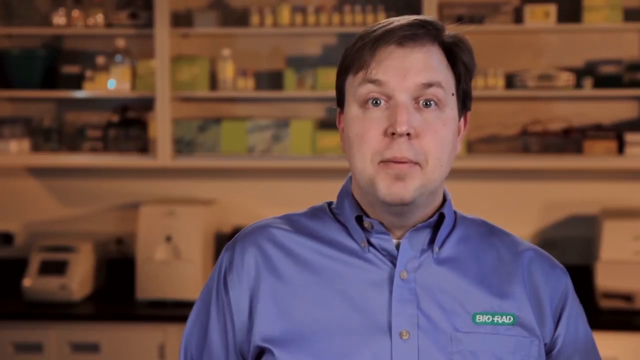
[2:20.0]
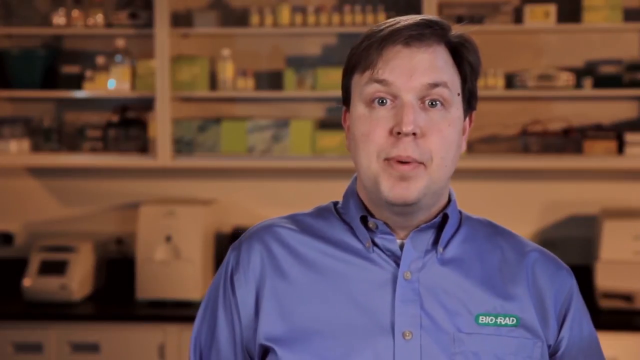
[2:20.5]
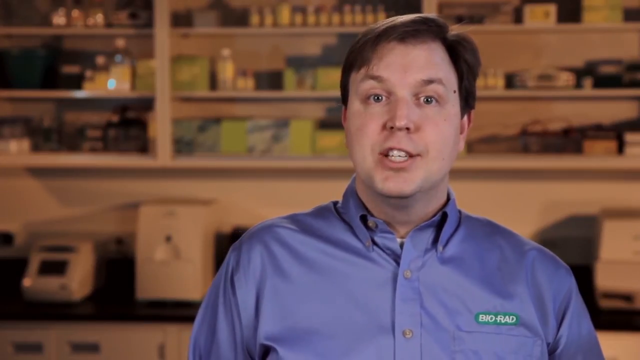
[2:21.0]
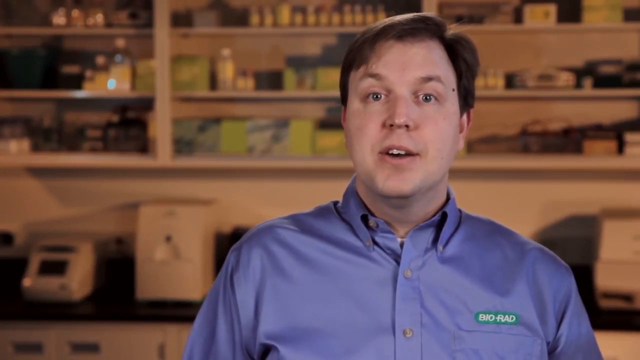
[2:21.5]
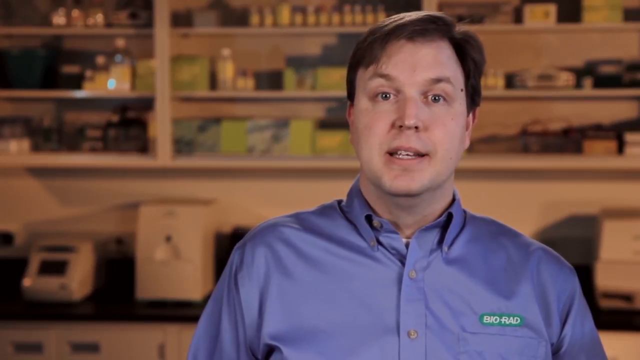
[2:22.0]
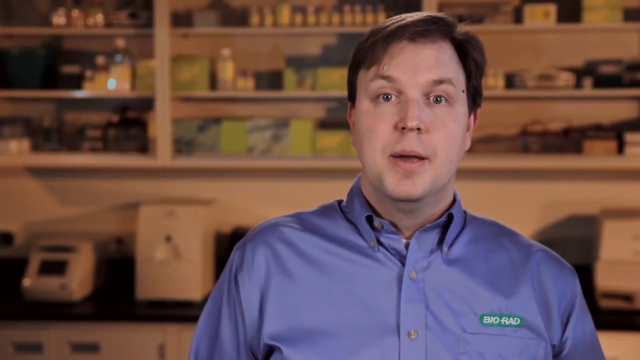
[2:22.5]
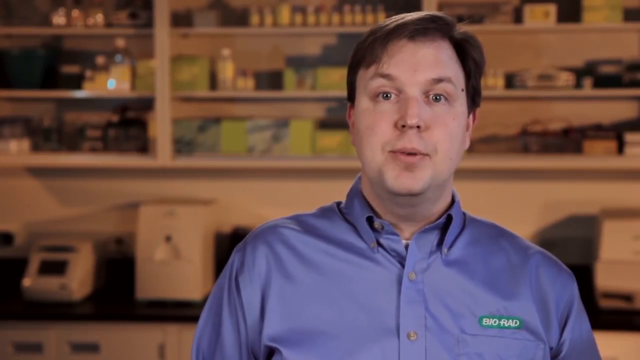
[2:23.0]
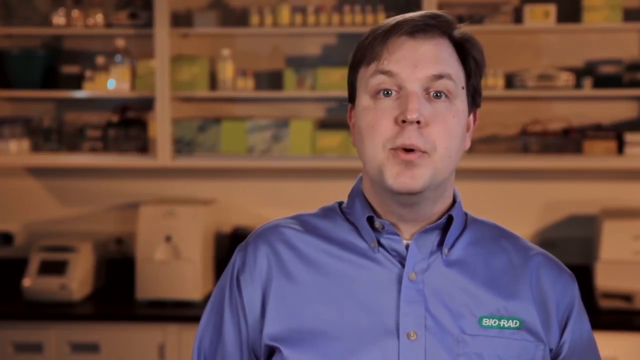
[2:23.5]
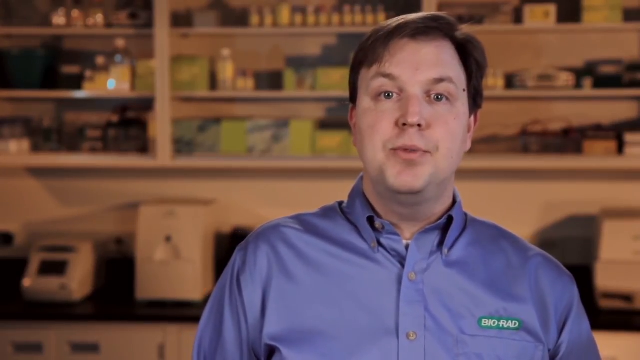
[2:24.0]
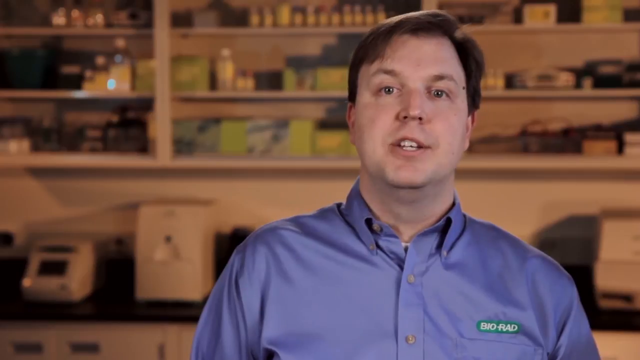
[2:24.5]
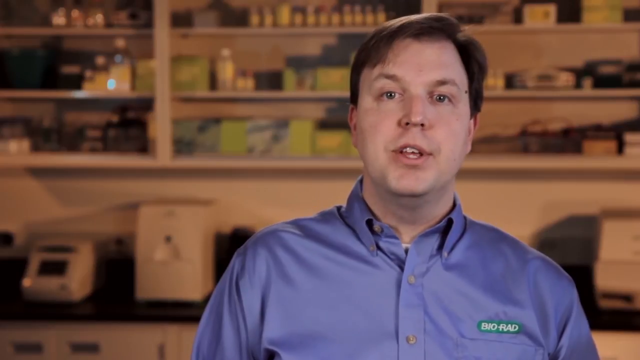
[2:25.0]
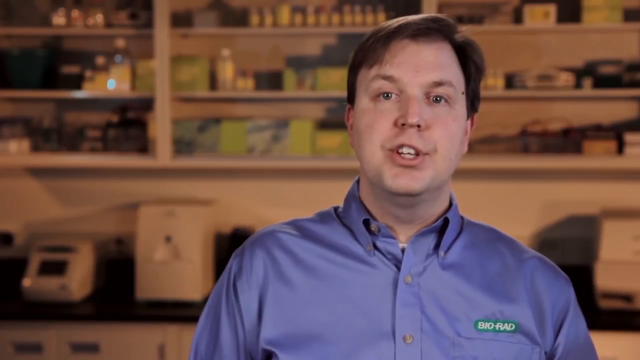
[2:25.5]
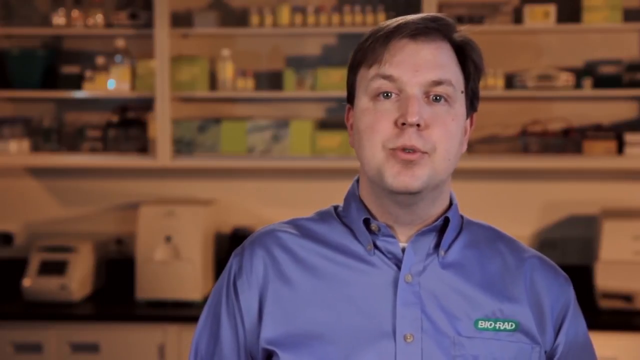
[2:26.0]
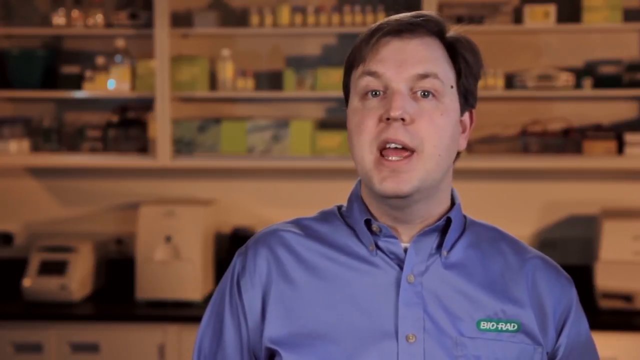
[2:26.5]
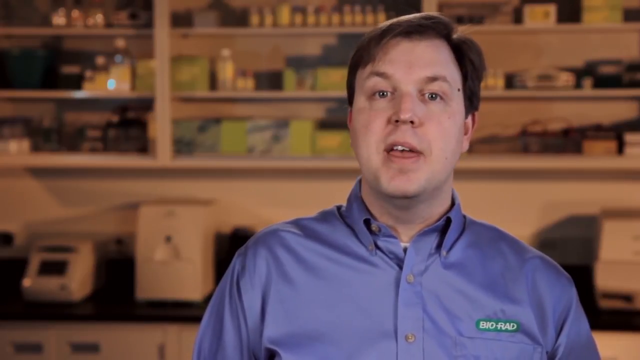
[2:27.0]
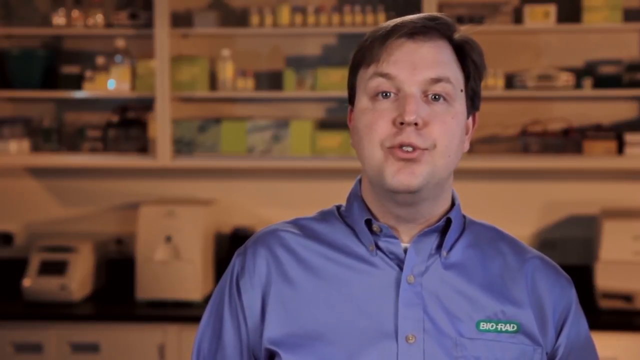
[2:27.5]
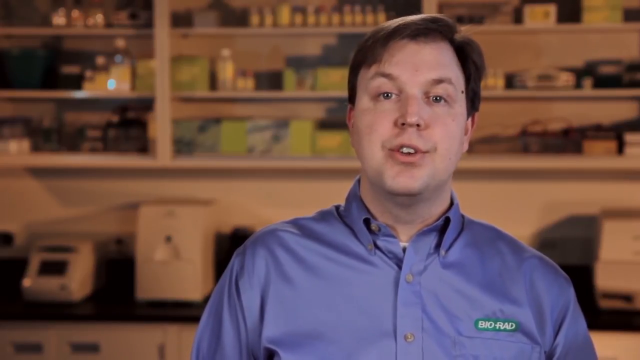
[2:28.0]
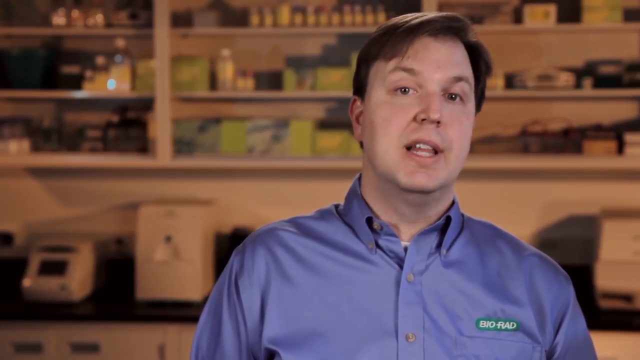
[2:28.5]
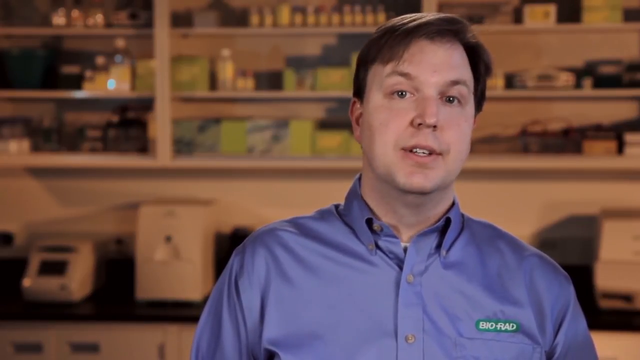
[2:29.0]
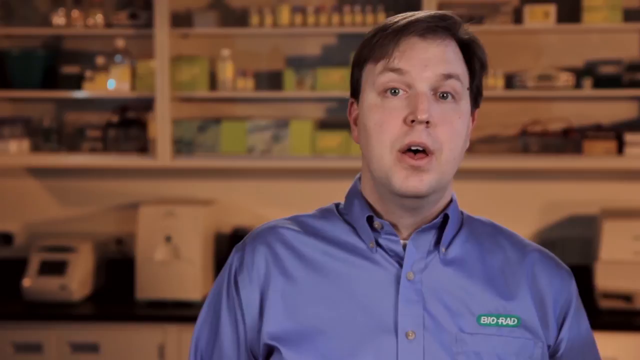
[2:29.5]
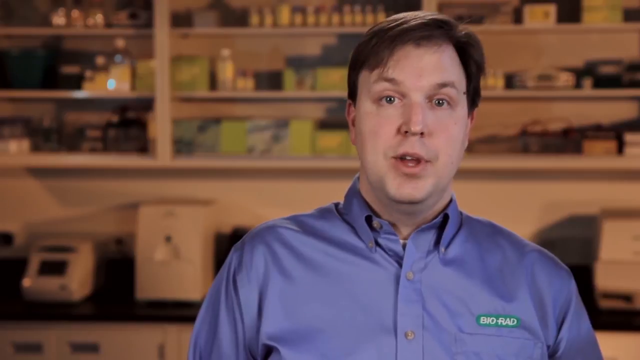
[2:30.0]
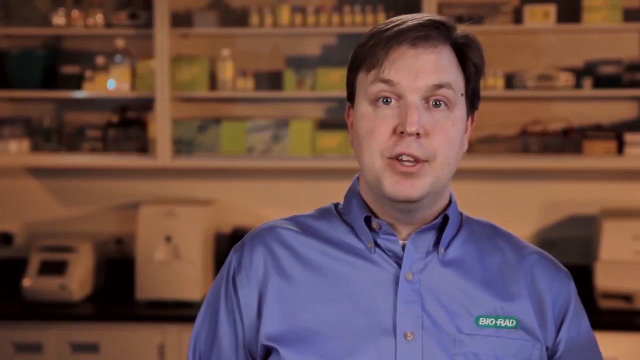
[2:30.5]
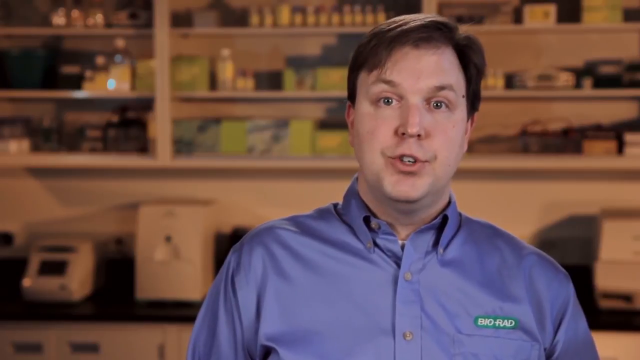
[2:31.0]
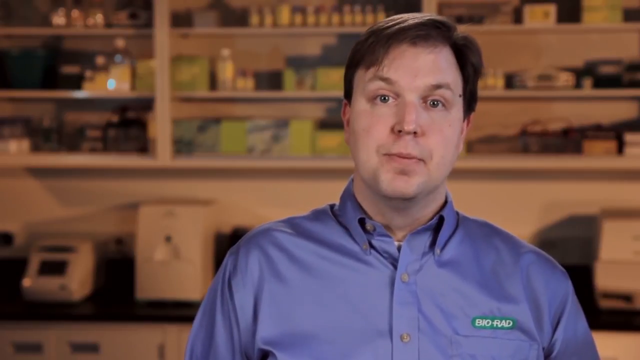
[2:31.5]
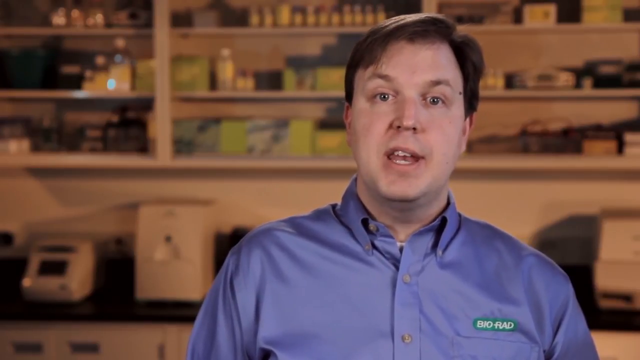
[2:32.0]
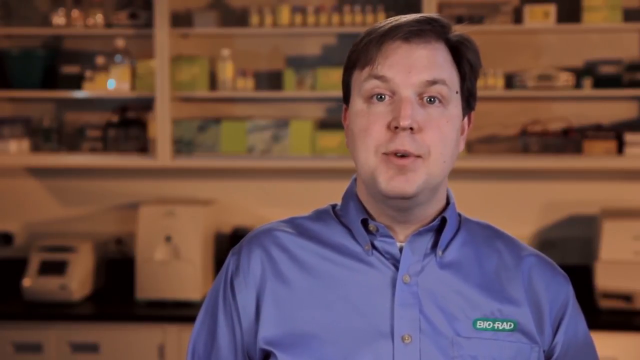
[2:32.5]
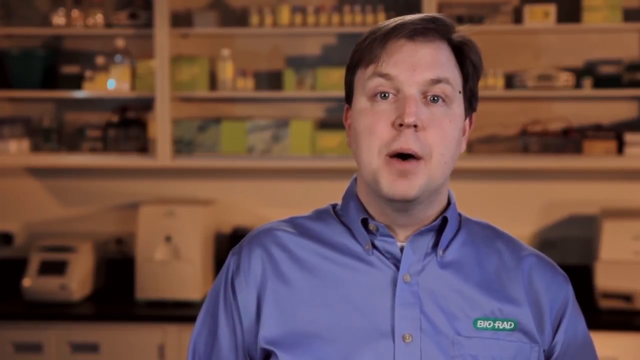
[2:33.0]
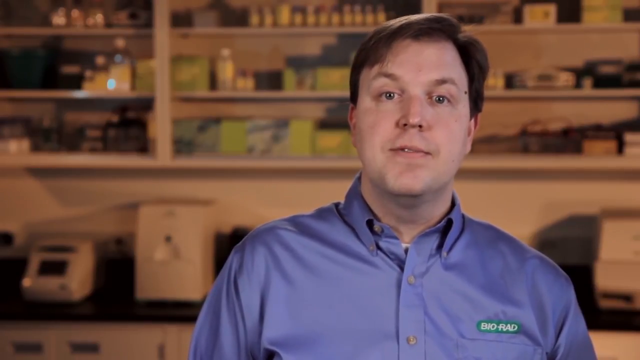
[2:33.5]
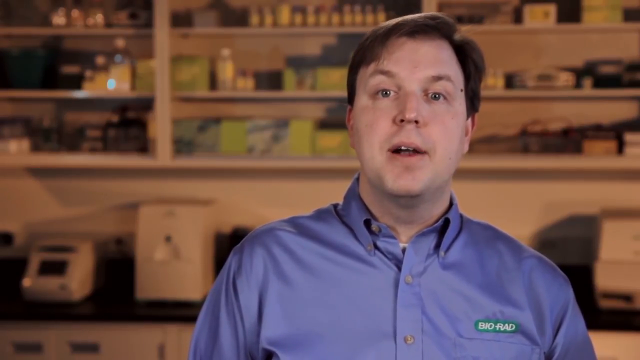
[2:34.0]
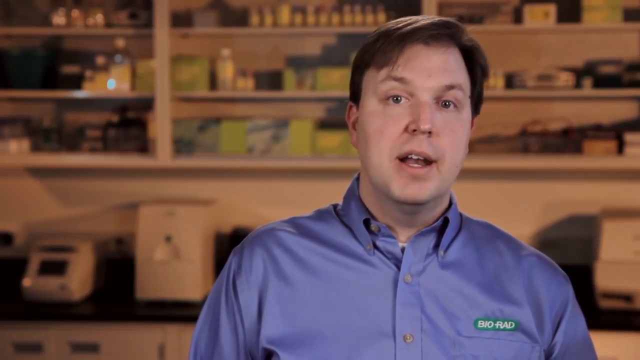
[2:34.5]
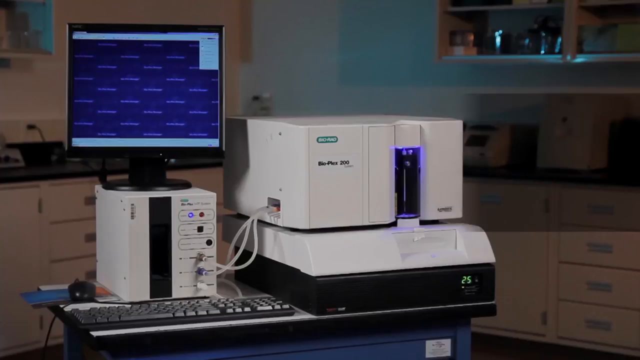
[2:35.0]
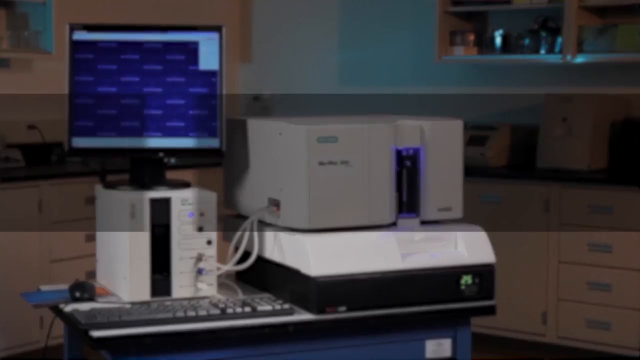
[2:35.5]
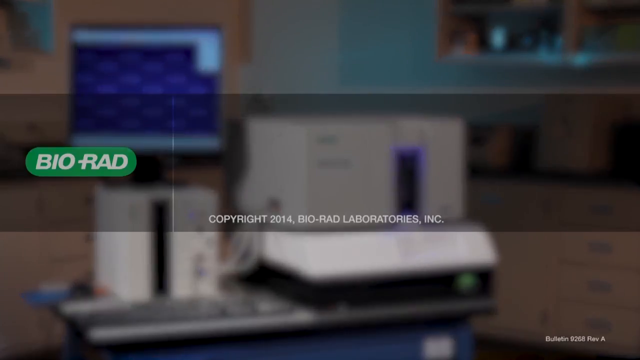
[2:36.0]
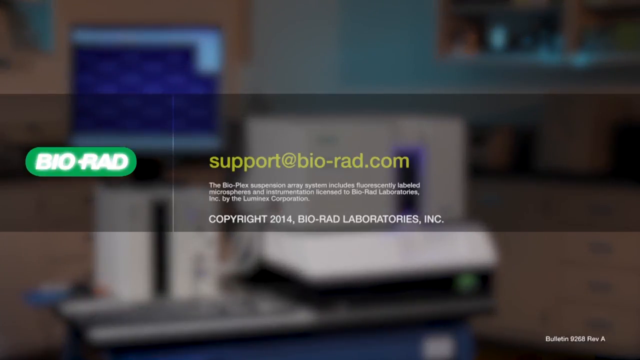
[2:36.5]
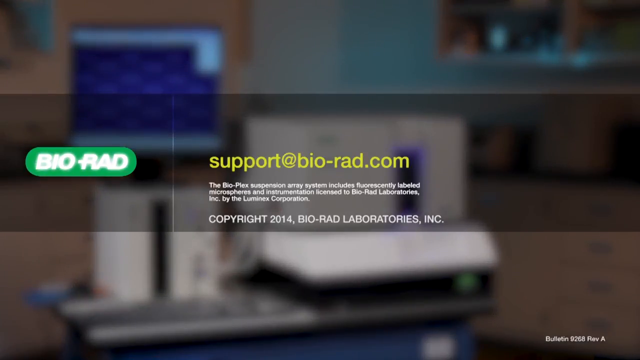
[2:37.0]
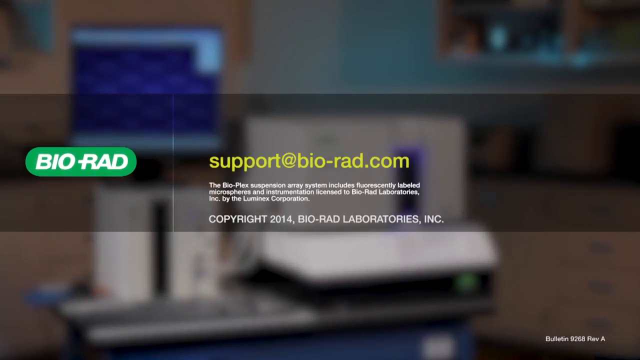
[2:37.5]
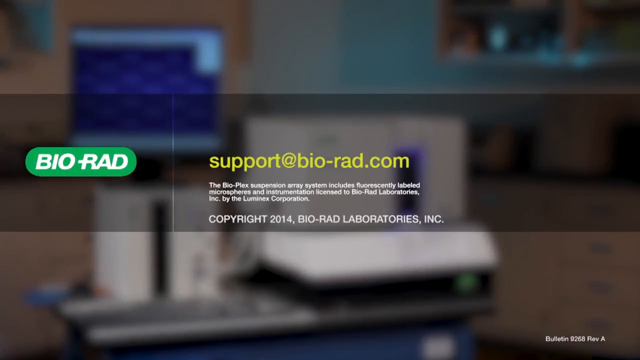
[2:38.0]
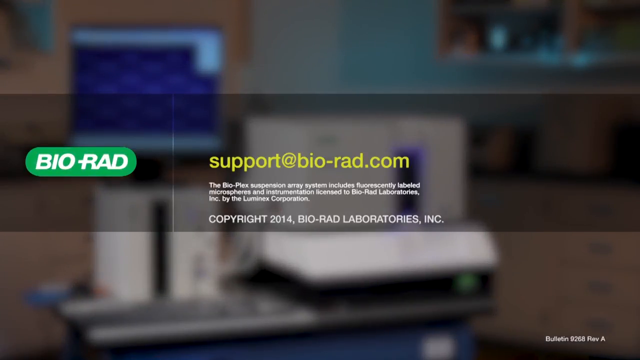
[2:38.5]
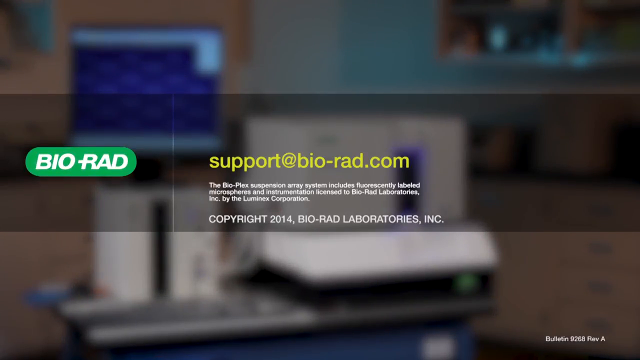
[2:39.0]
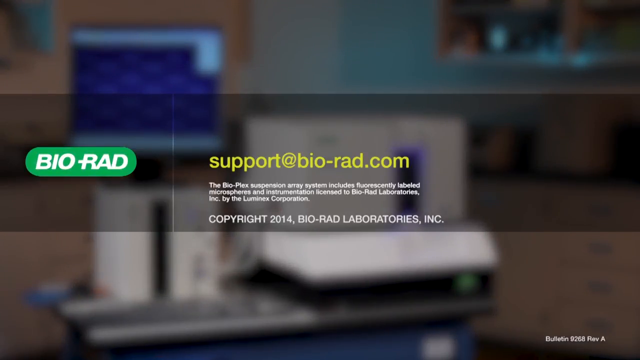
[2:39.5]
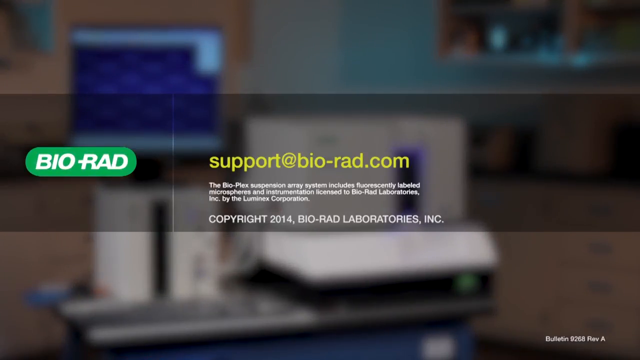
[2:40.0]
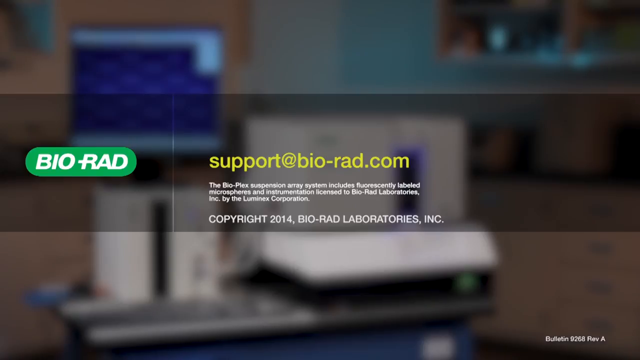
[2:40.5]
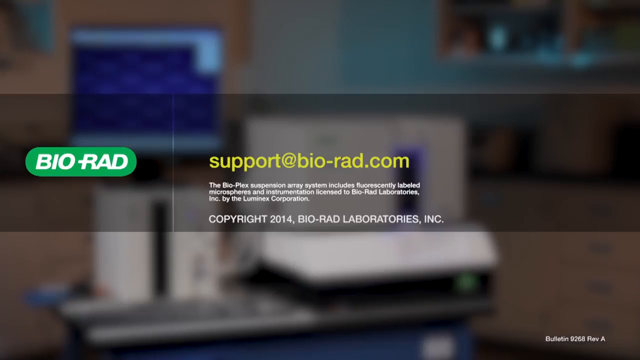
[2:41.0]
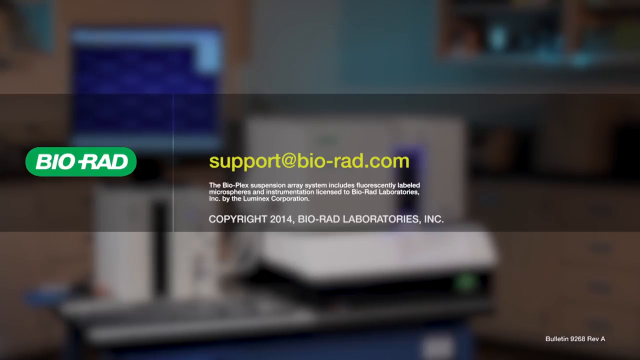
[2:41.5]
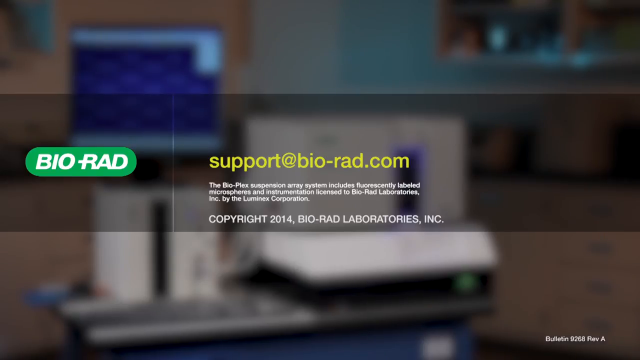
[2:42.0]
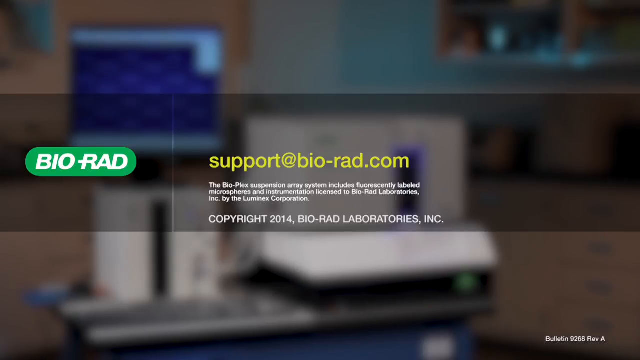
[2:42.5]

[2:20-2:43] A man stands in a lab facing the camera. He is Caucasian, has brown hair and wears a collared blue shirt with the green BIO RAD label on the left front. In the background are three horizontal rows and three columns of shelves full of supplies. The man begins to speak toward the viewer at a hurried pace and turns his head a little to the left. The video then switches to a view of the lab with the white Bio-Plex 200 machine in the background. Two transparent textboxes merge into one at the center of the frame. On the left side of this textbox is the green BIO RAD logo. On the right side, yellow text reads "support@bio-rad.com." Beneath that, small white text reads "The Bio-Plex suspension array system includes flourescently labeled microspheres and instrumentation licensed to Bio-Rad Laboratories, Inc. by the Luminex Corporation." Beneath that, white text says "COPYRIGHT 2014, BIO-RAD LABORATORIES, INC."